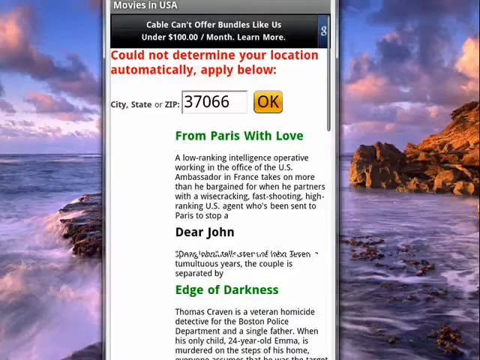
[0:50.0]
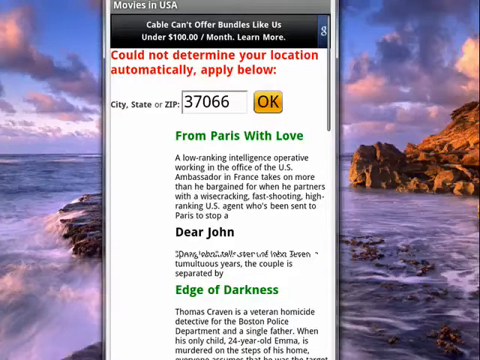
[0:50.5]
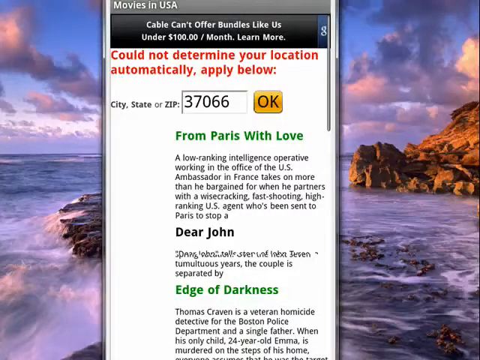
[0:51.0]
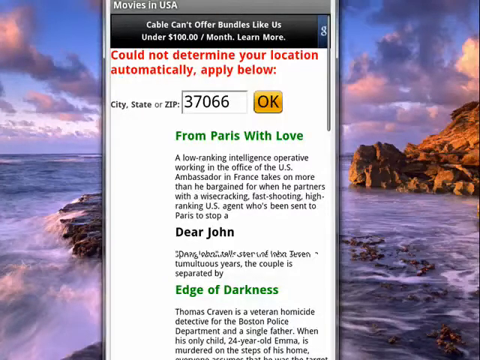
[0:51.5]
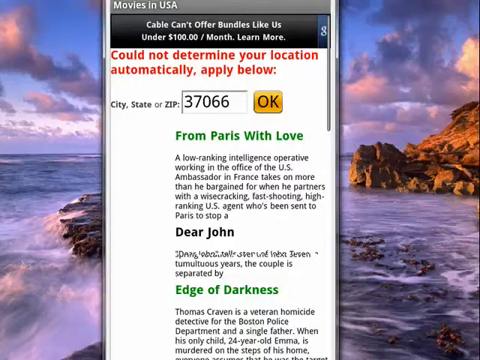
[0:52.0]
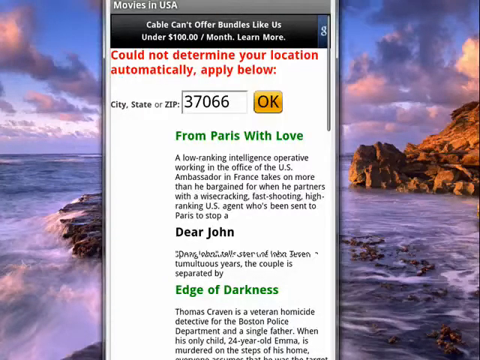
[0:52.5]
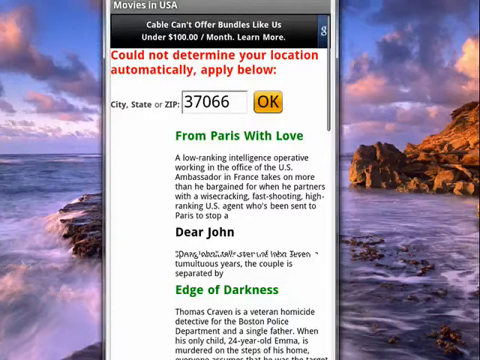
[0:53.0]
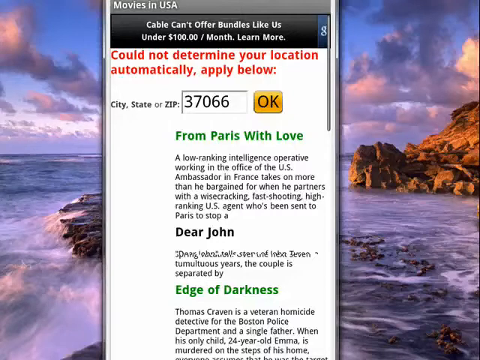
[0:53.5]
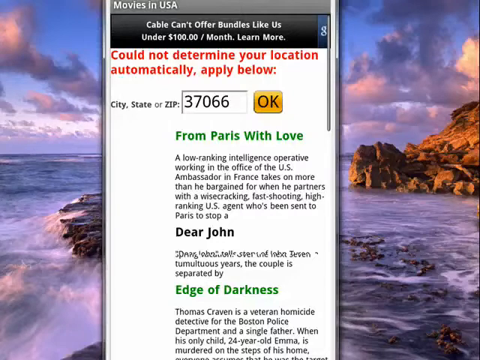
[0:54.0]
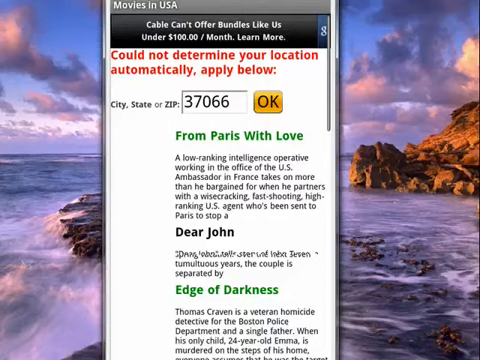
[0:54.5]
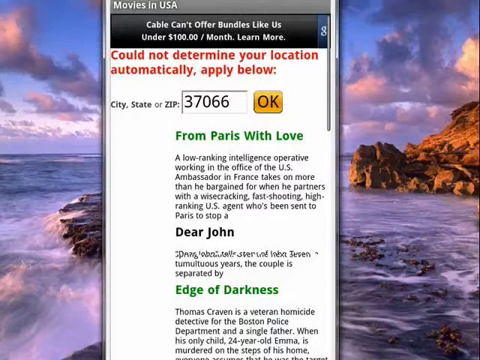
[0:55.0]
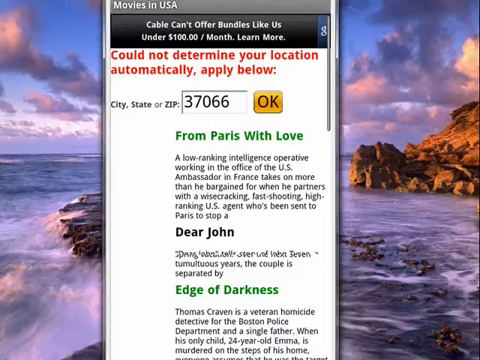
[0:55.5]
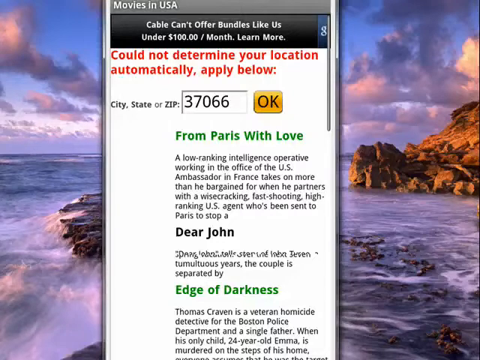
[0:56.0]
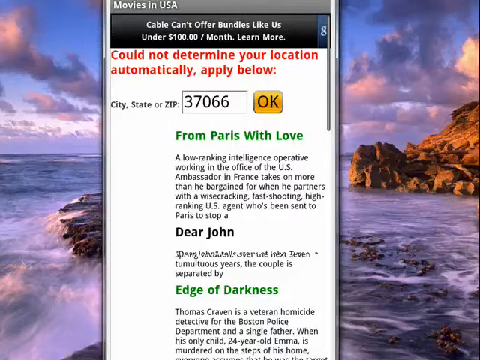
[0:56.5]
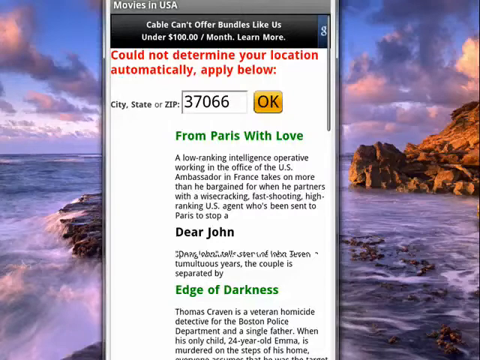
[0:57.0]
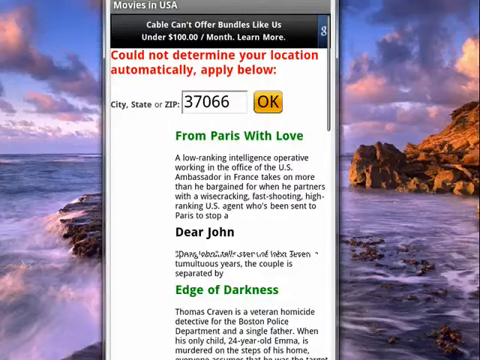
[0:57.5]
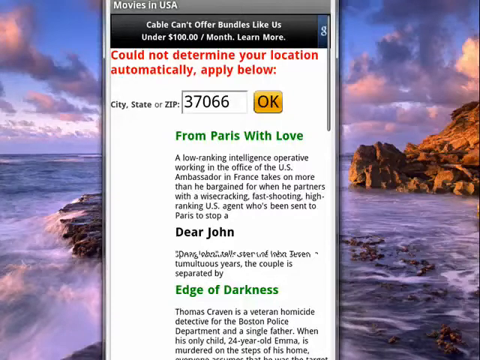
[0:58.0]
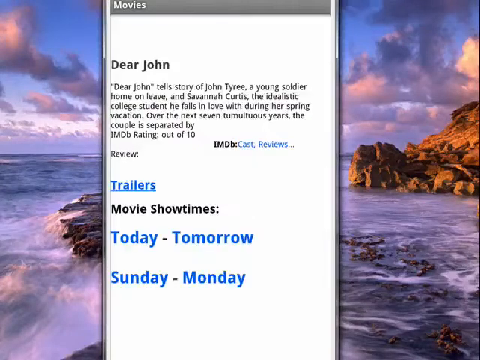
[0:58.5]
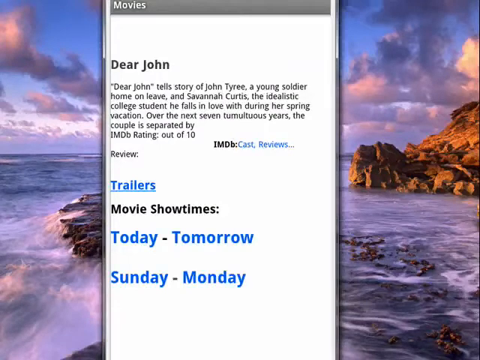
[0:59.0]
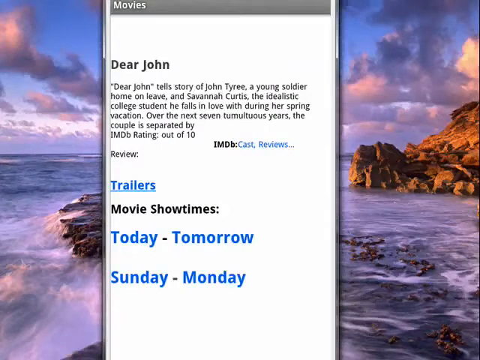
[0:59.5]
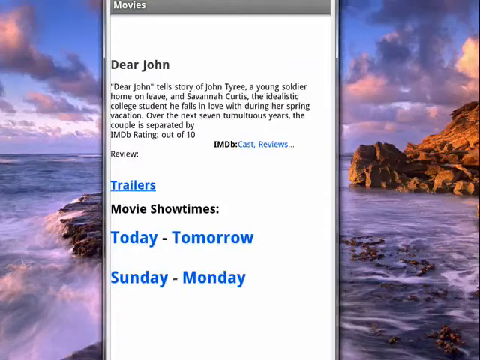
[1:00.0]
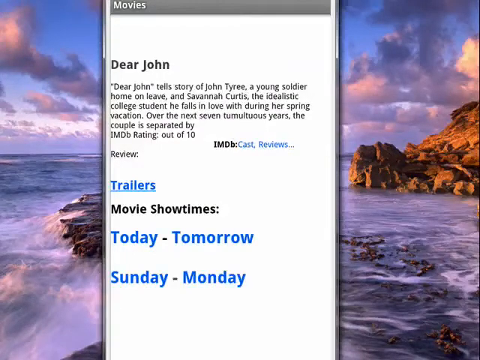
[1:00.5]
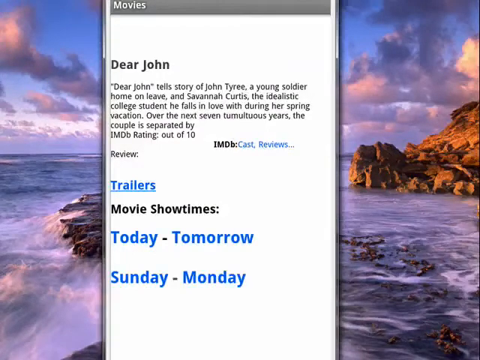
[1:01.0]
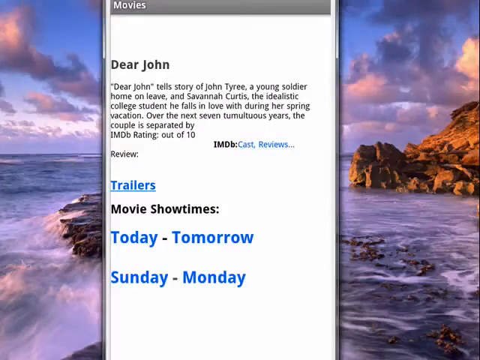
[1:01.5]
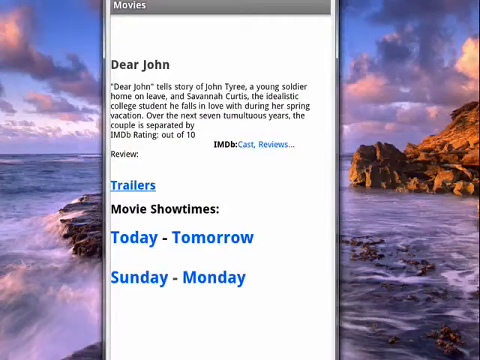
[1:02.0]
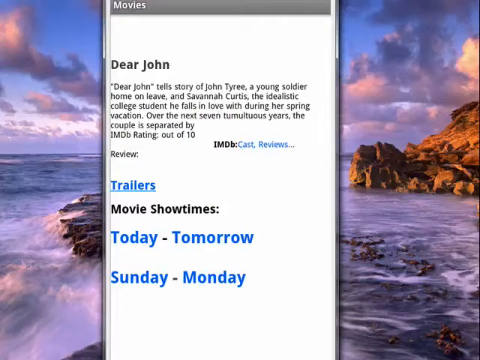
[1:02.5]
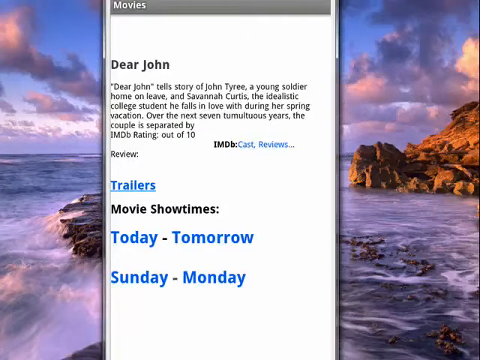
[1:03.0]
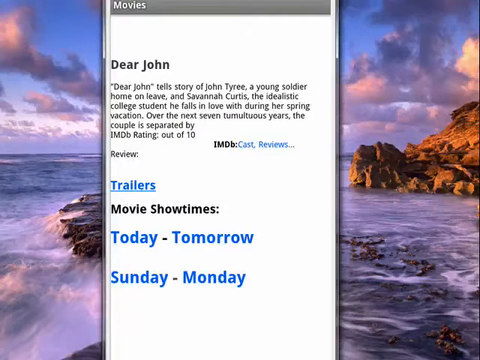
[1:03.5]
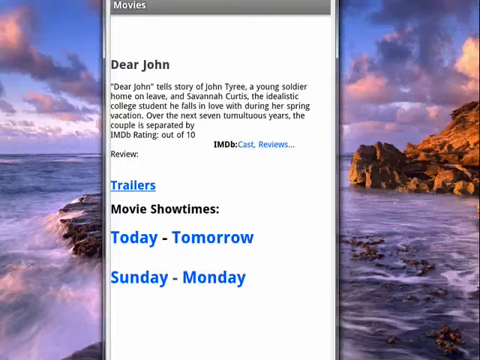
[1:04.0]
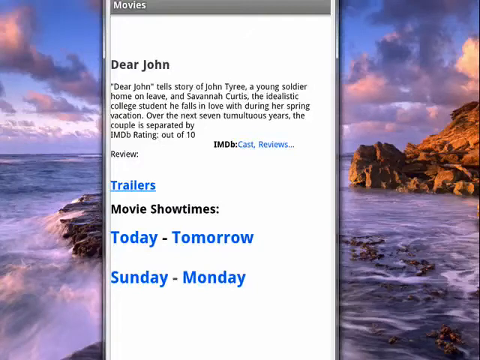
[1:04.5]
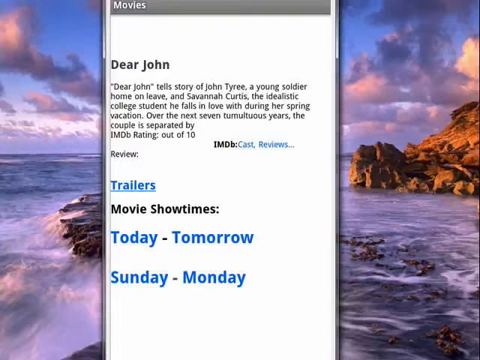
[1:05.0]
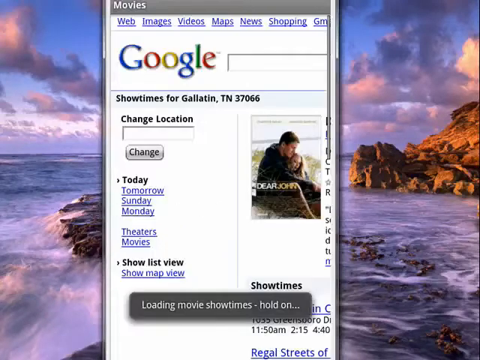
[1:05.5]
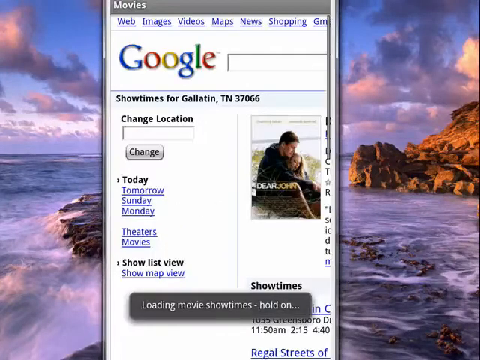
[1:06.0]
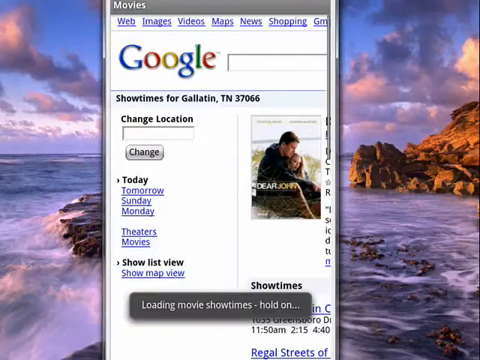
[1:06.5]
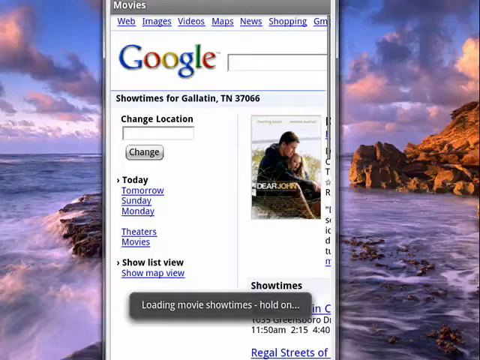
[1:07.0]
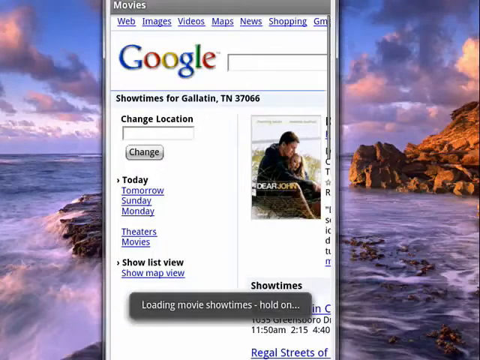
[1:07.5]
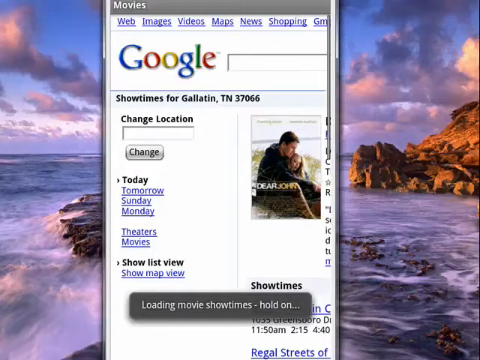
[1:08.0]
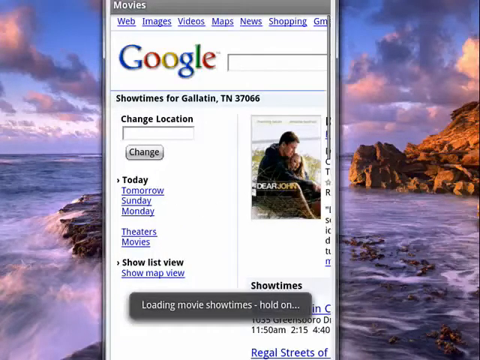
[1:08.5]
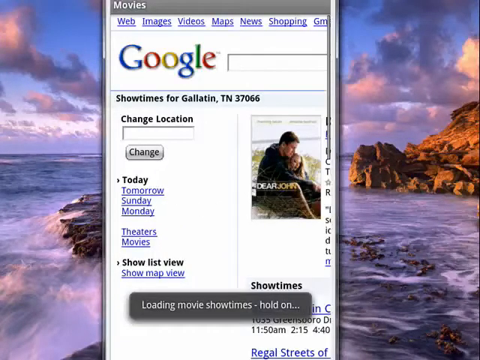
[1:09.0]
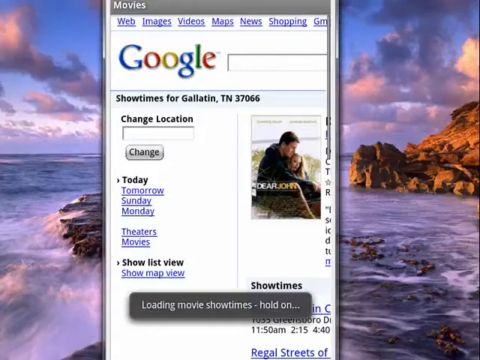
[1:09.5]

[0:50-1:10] The person clicks on the Dear John section, which brings up more of a description. In a smaller font below the title, it says "Dear John tells story of John Tyree, a young soldier home on leave, and Savannah Curtis, the idealistic college student he falls in love with during her spring vacation. Over the next seven tumultuous years the couple is separated by." Underneath it says "IMDB rating out of 10," followed by IMDB and links for cast and reviews and trailers. It also says "movie show times" with "today, tomorrow, Sunday, Monday"; these words and trailers are in blue text. The view then moves to the Google site, with Google options such as images, videos and maps at the top. On the right-hand side is the Dear John poster with the actress Amanda Seyfried and the actor Channing Tatum, with showtimes at a specific cinema underneath.